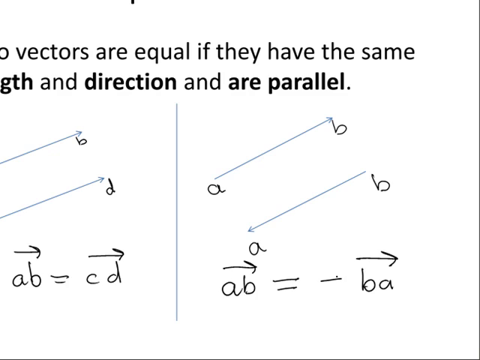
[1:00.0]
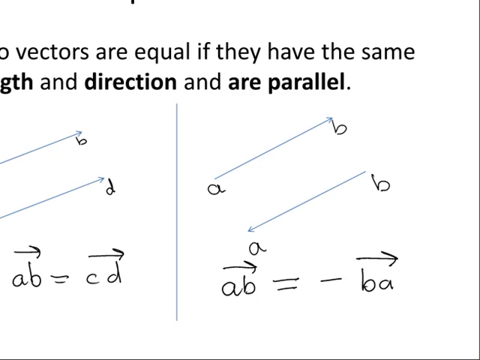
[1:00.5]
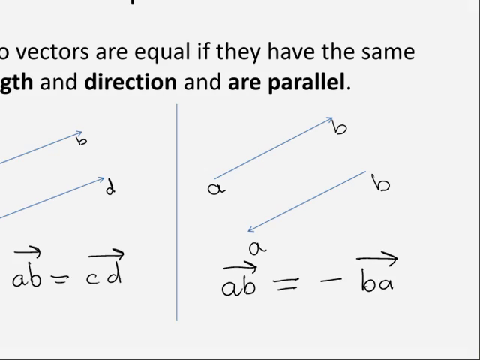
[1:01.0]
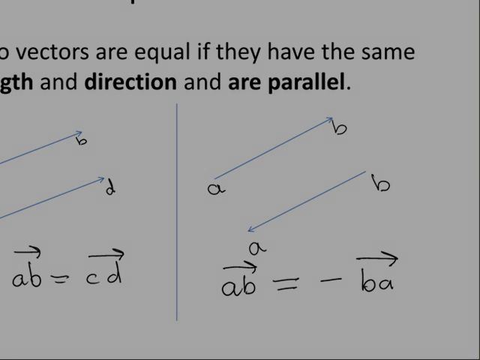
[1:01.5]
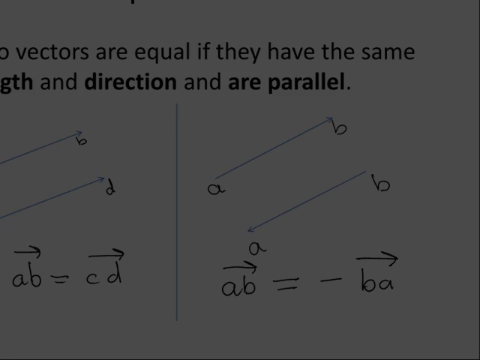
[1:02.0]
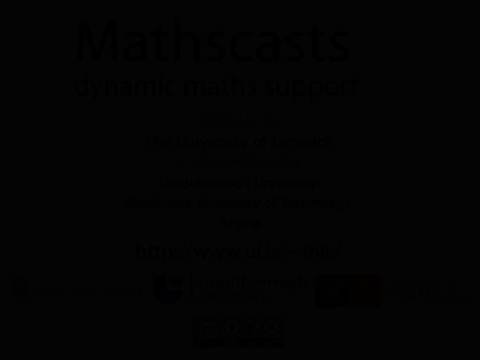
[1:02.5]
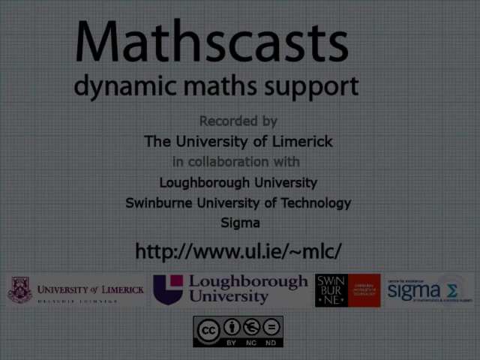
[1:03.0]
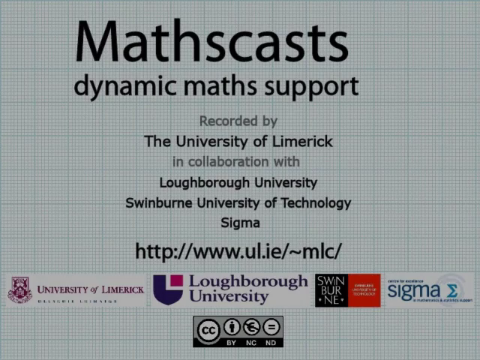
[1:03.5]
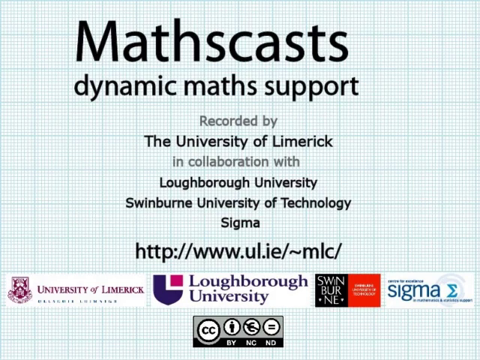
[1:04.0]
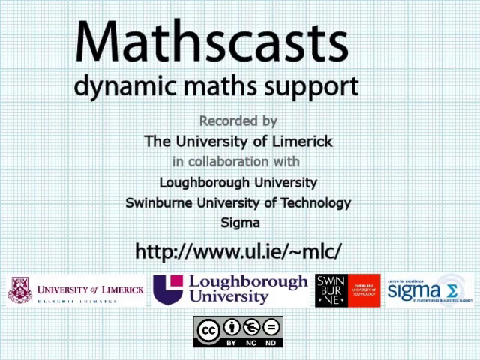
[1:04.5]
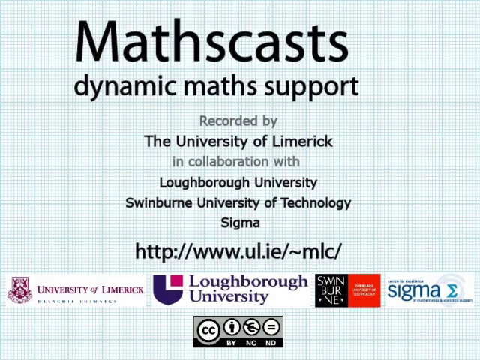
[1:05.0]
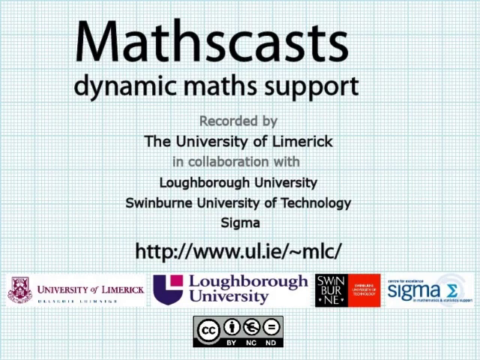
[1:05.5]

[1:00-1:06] The worksheet with the parallel lines fades to black, and a background that looks like white and blue graphing paper with very small lines appears. Toward the top, large black letters say "Mathscasts Dynamic Maths Support," and smaller letters say "Recorded by the University of Limerick in collaboration with Loughborough University, Swinburne University of Technology, Sigma." Beneath that is the web address "http://www.ul.ie/~mlc," and below it the logos for the University of Limerick, Loughborough University, Swinburne, and Sigma.